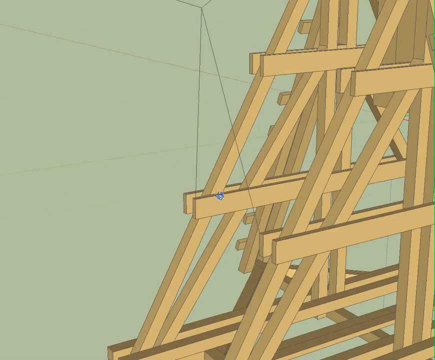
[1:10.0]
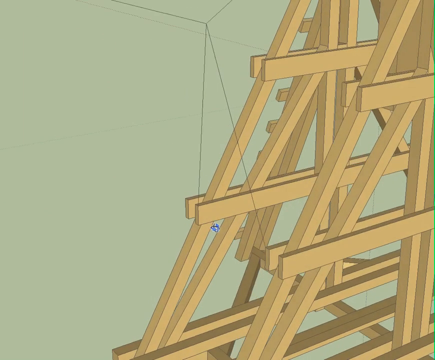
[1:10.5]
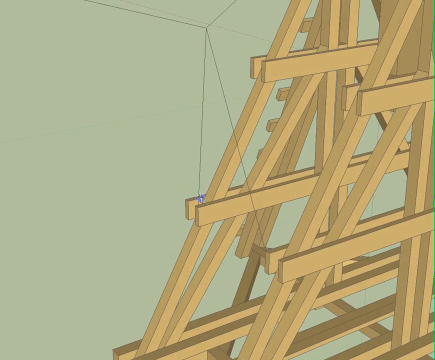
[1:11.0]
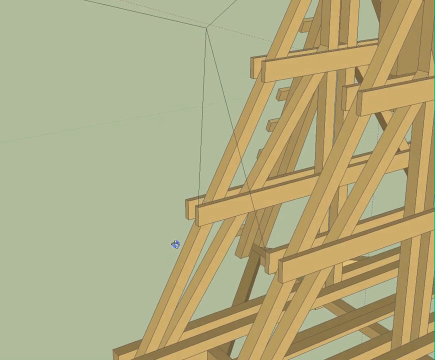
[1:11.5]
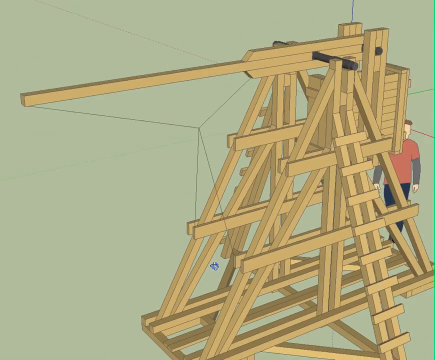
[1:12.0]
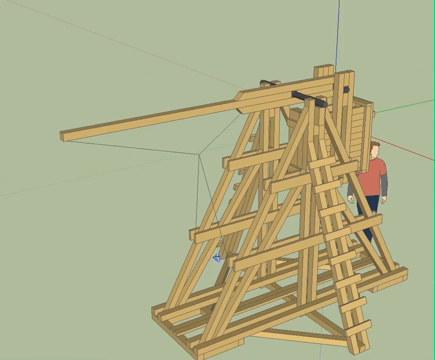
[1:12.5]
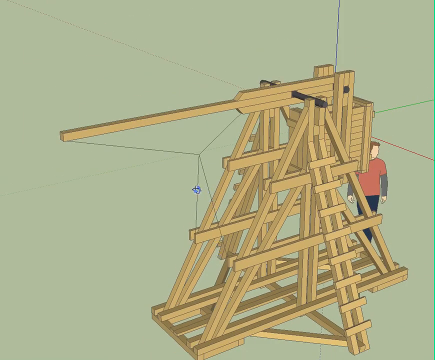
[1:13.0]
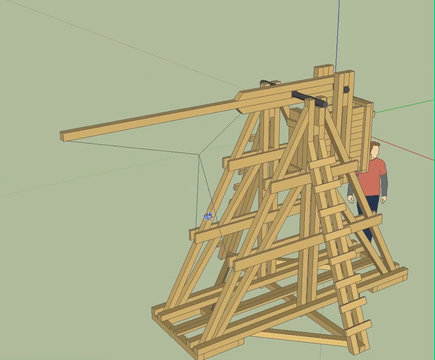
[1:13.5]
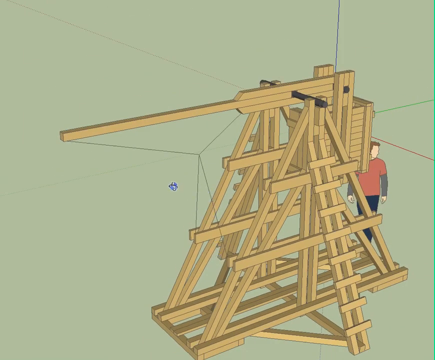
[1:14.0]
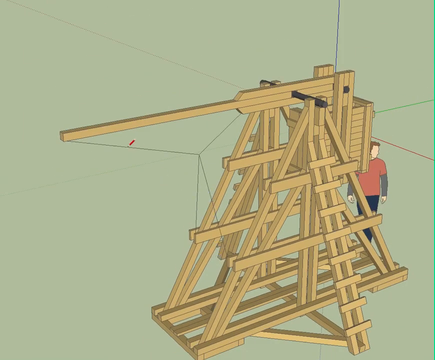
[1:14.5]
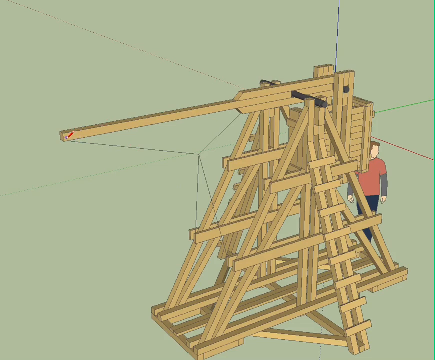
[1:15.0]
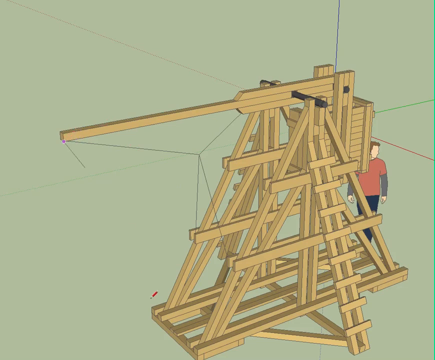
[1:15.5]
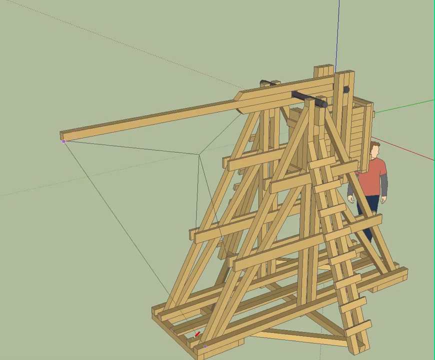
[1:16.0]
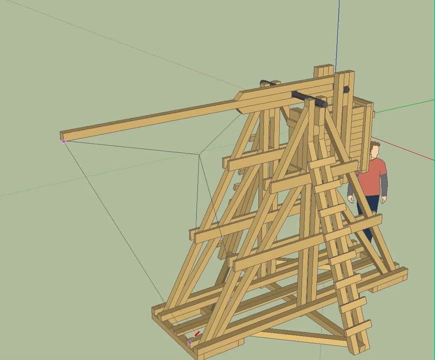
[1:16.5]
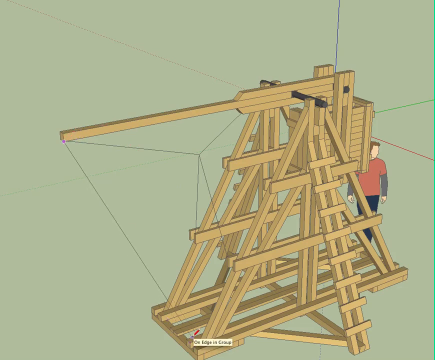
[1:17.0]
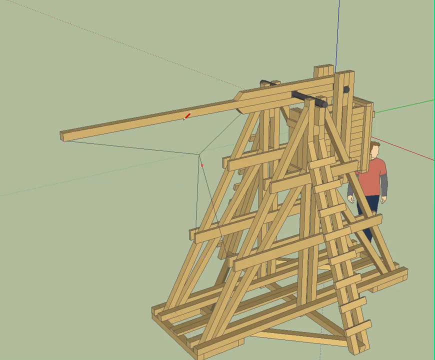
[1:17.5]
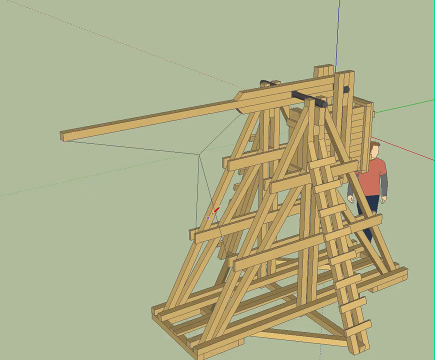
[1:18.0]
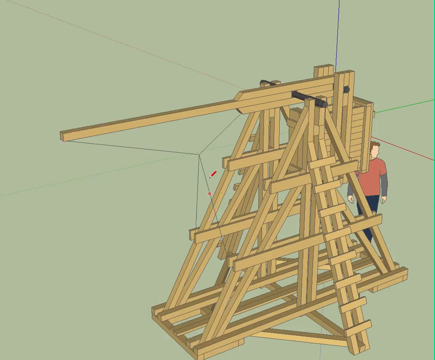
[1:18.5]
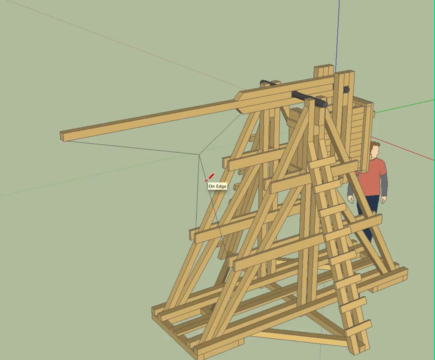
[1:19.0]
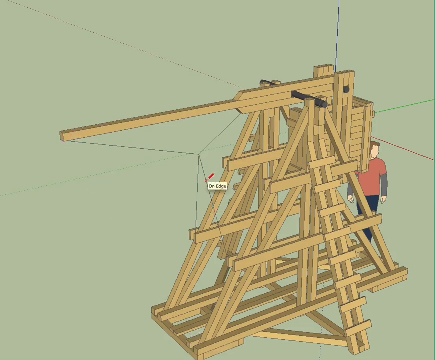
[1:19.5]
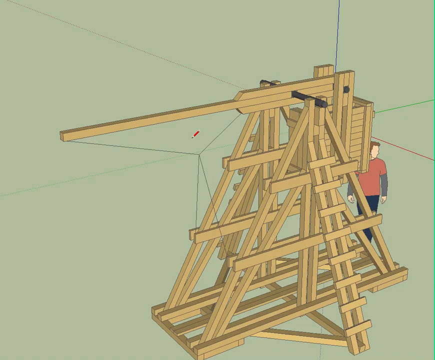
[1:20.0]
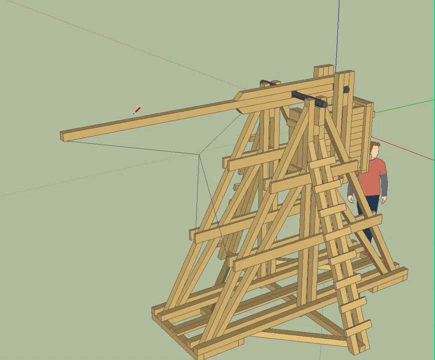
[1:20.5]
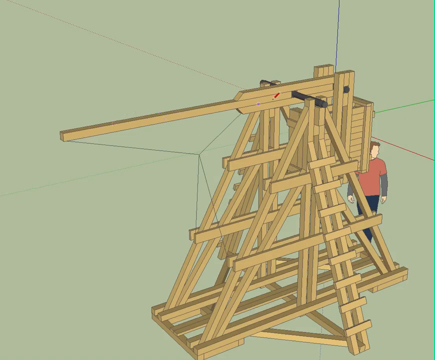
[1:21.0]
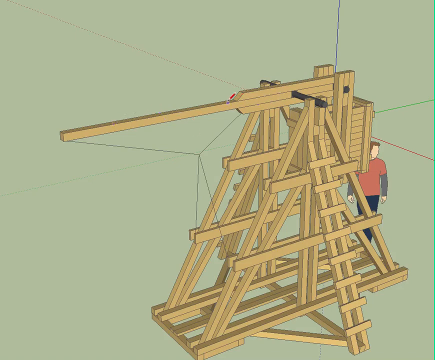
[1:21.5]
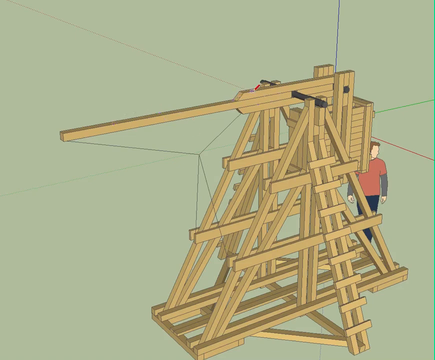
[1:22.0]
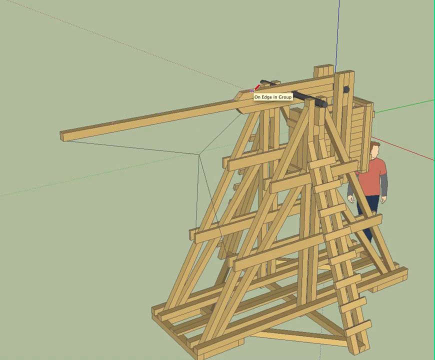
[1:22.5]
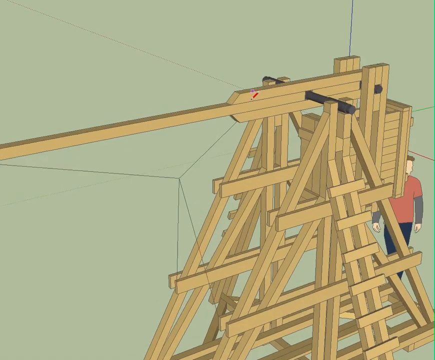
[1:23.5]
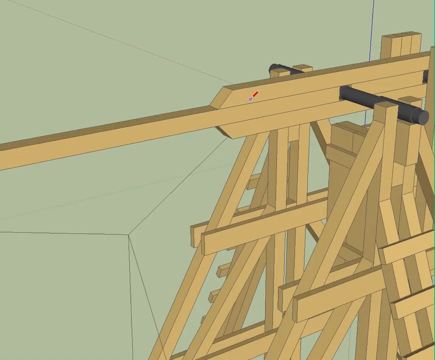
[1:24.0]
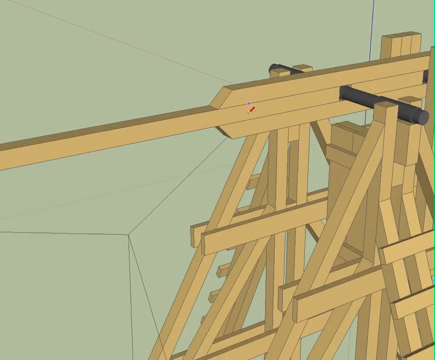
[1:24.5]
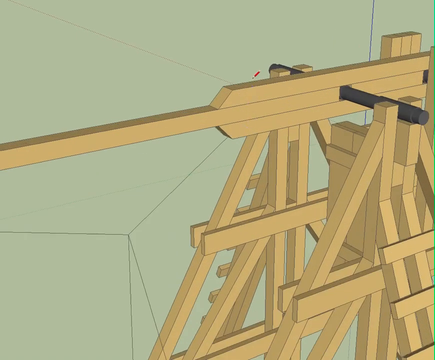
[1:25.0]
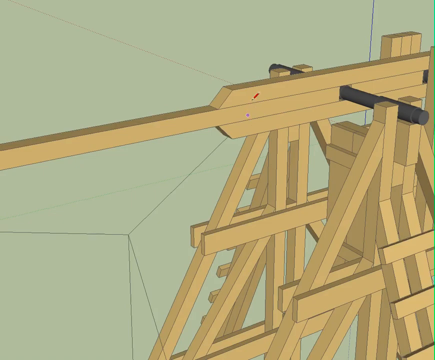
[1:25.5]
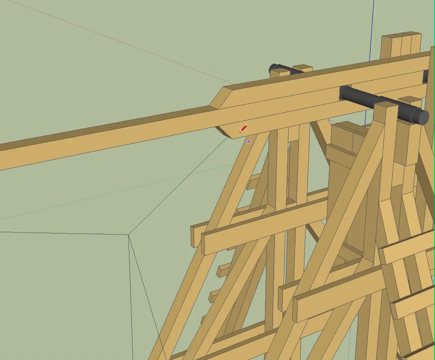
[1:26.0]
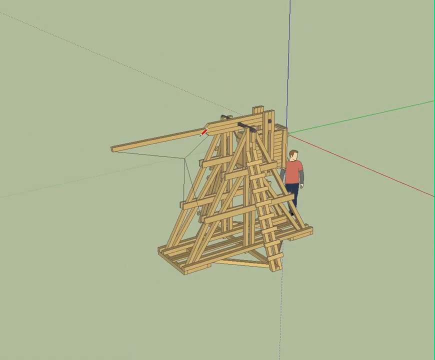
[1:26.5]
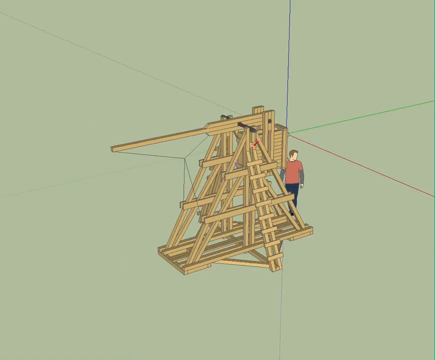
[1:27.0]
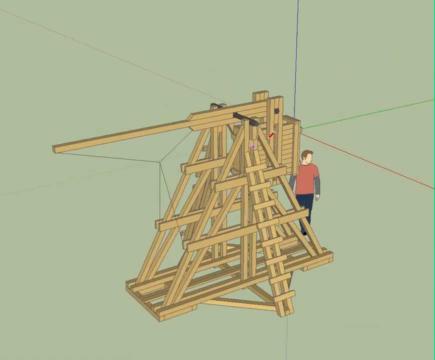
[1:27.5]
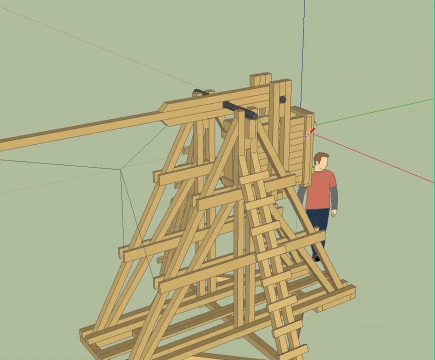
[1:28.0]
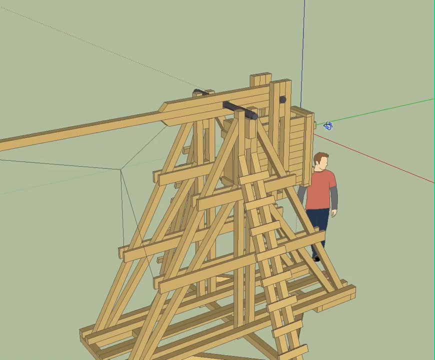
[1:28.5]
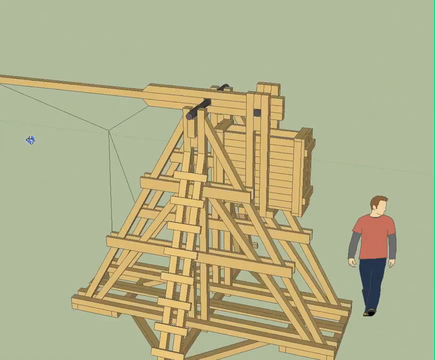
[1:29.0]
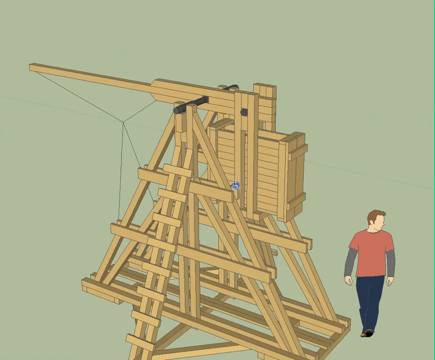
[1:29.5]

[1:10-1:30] A blue structure touches the right side of the lumber contraption. Then something is attached to the barrel of the wooden gun: a piece of string goes from the bottom of the gun to its tip, then one is attached to the middle lumber on the right side and then to the middle lumber on the left side. A little editing pencil bounces around, putting dots on the structure. The cartoon man is still there. The cursor touches the top, the tip and the bottom, then touches all three wood panels, and then goes back to the front.